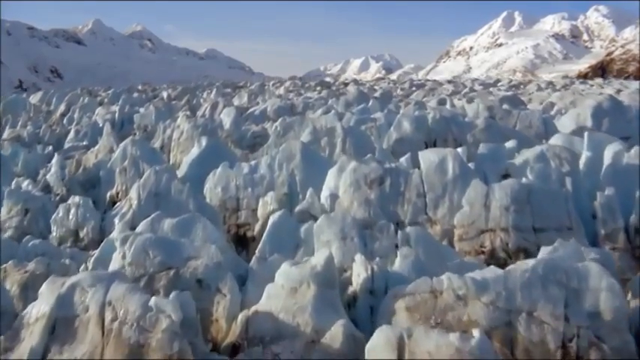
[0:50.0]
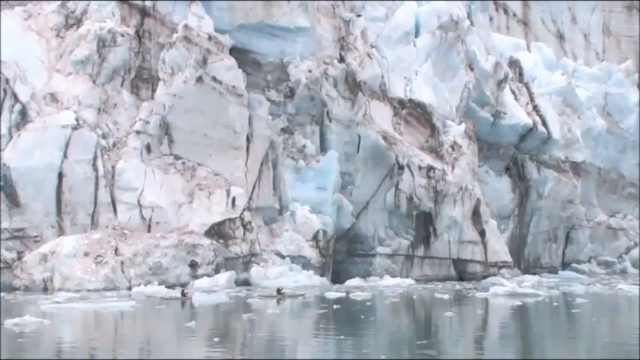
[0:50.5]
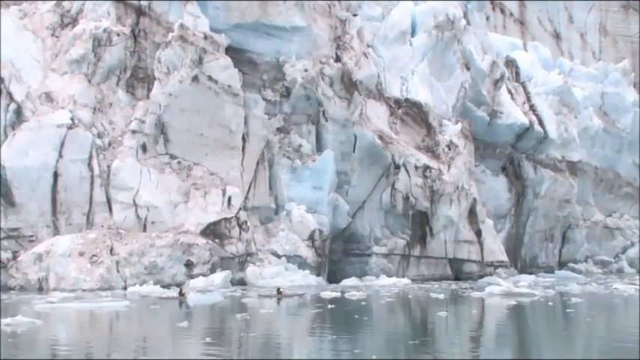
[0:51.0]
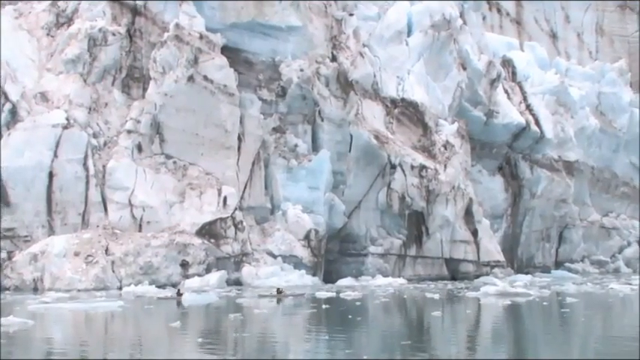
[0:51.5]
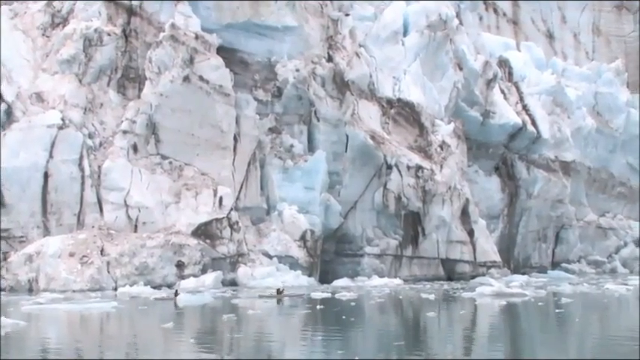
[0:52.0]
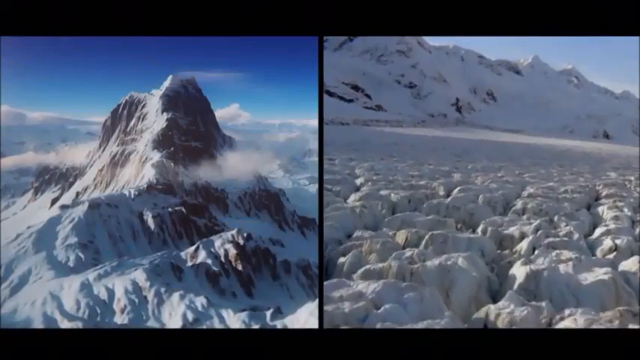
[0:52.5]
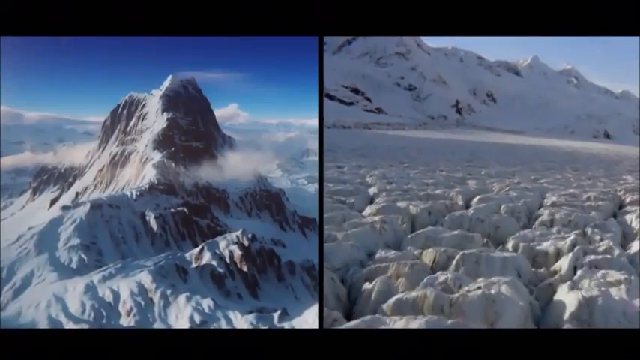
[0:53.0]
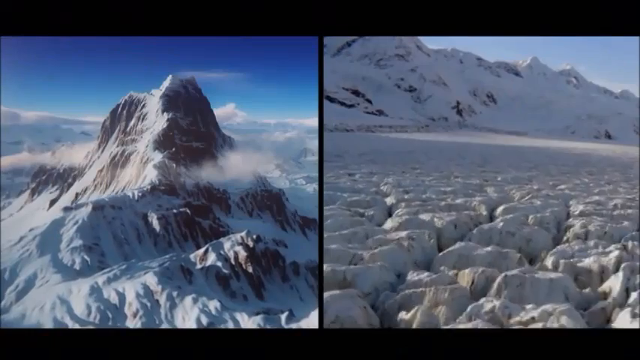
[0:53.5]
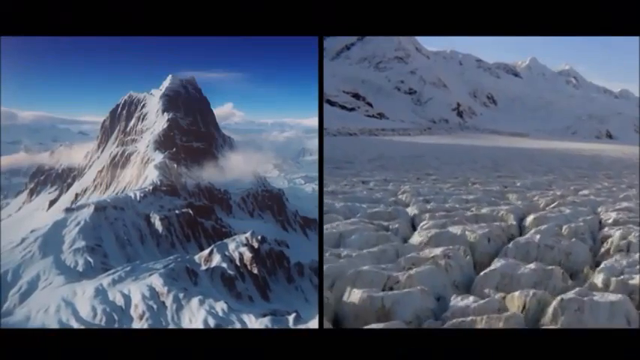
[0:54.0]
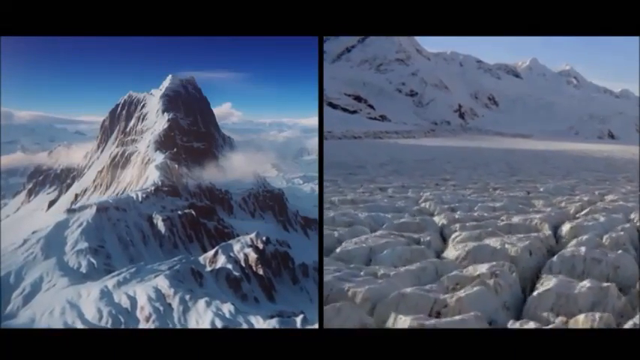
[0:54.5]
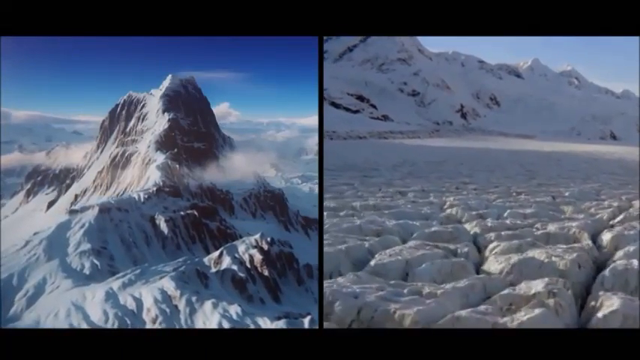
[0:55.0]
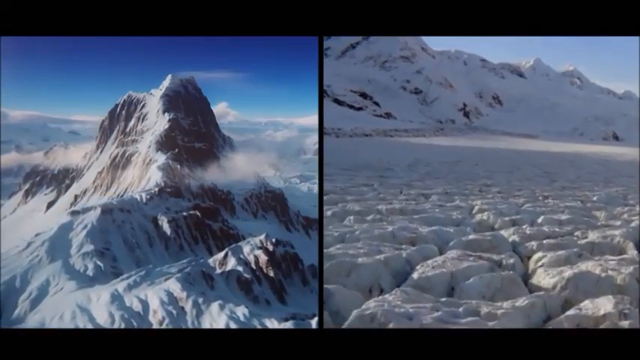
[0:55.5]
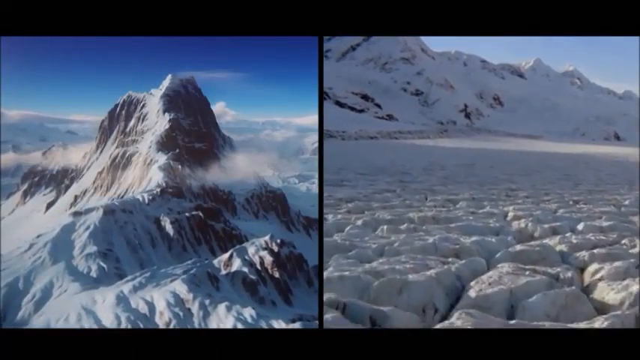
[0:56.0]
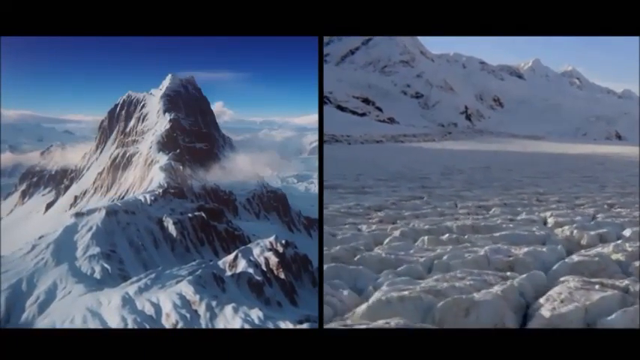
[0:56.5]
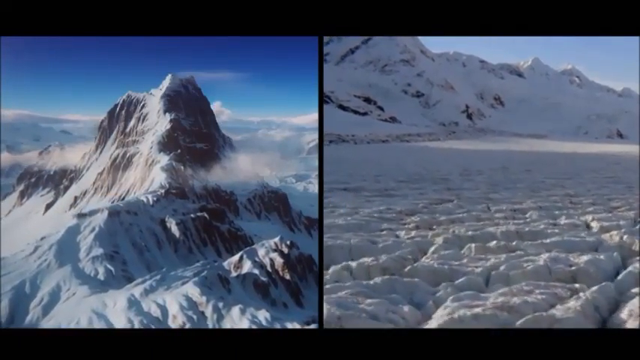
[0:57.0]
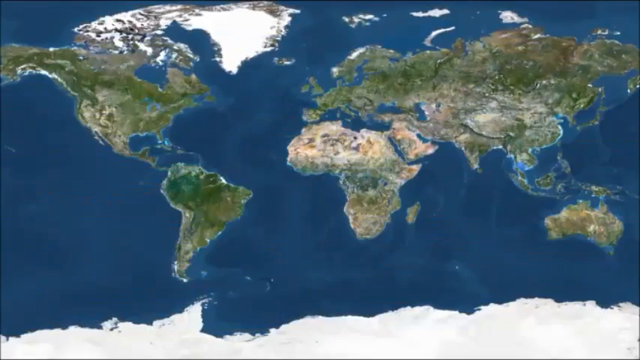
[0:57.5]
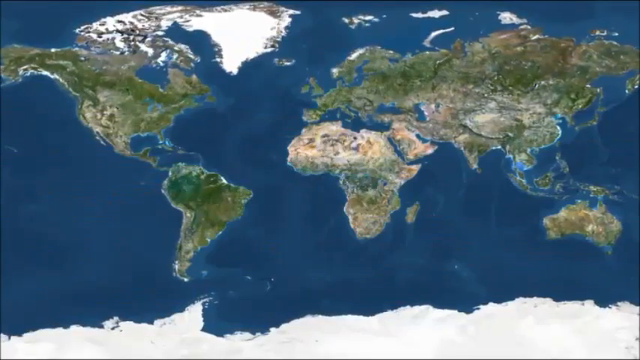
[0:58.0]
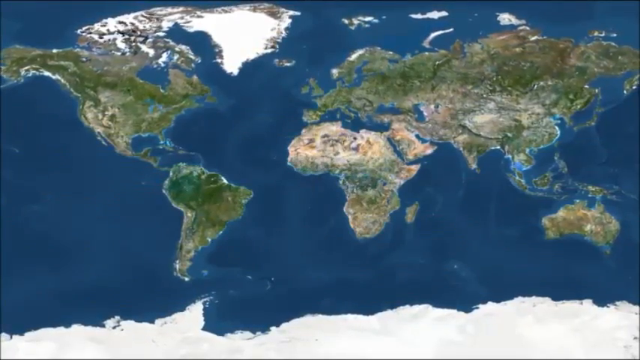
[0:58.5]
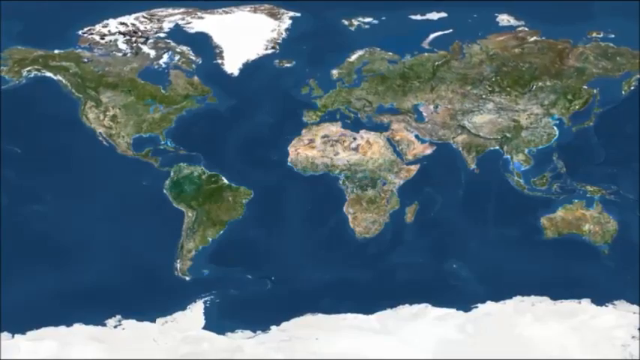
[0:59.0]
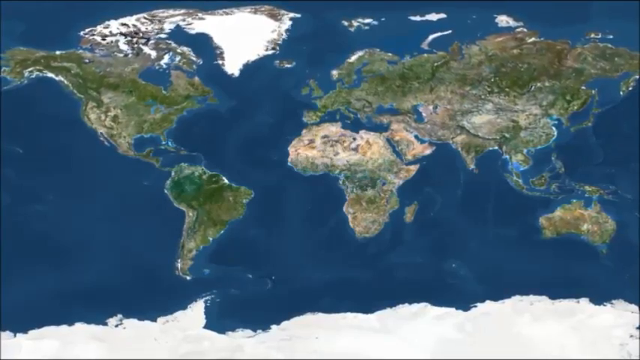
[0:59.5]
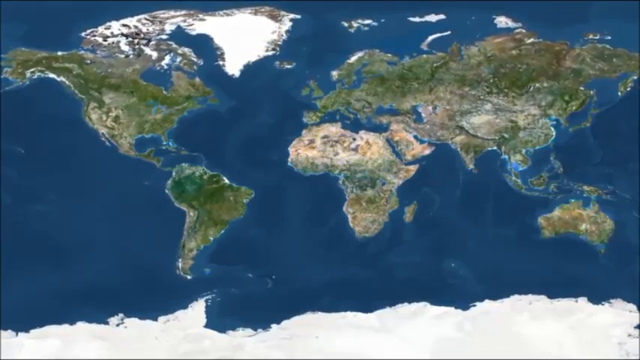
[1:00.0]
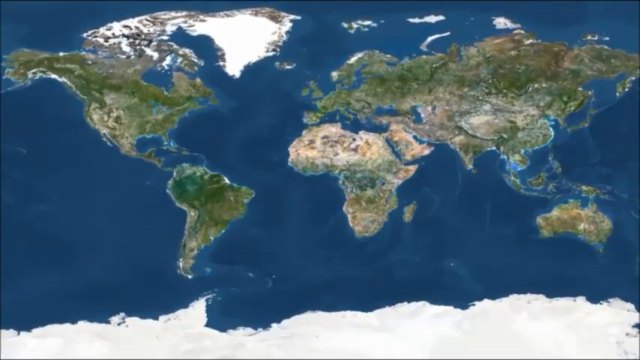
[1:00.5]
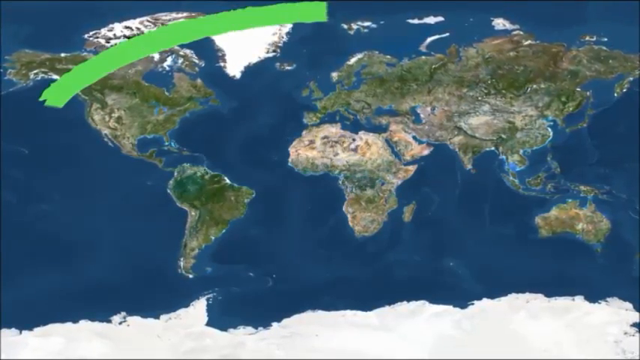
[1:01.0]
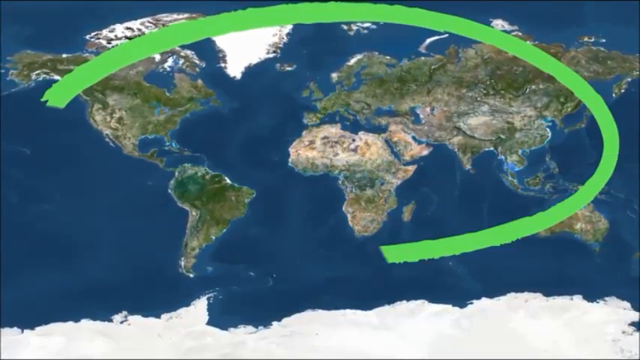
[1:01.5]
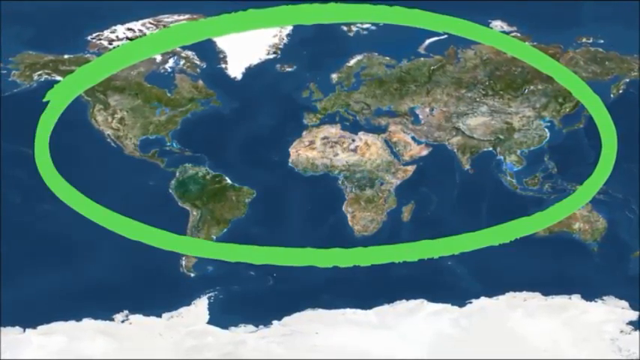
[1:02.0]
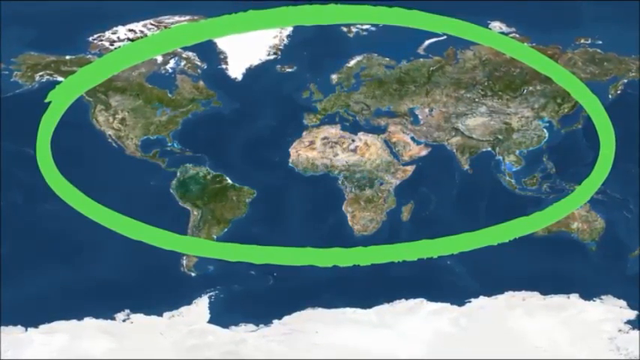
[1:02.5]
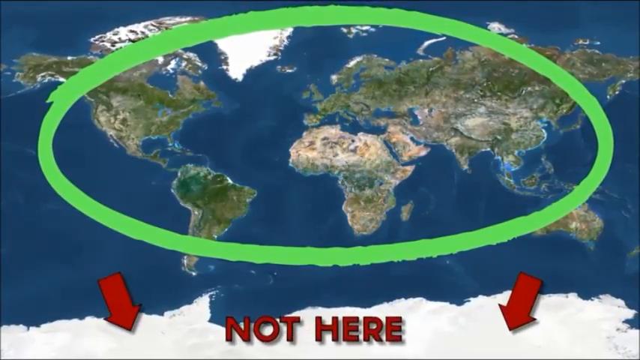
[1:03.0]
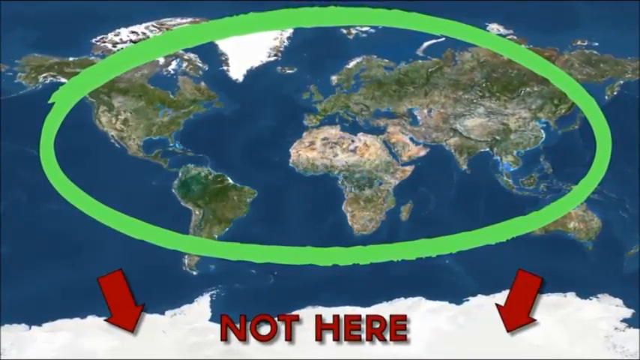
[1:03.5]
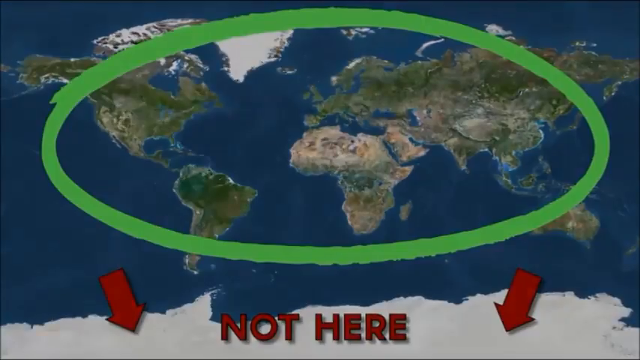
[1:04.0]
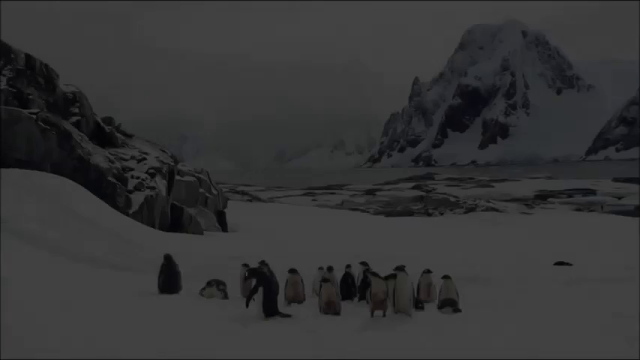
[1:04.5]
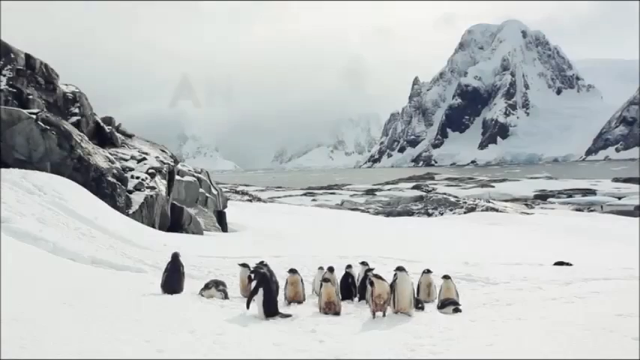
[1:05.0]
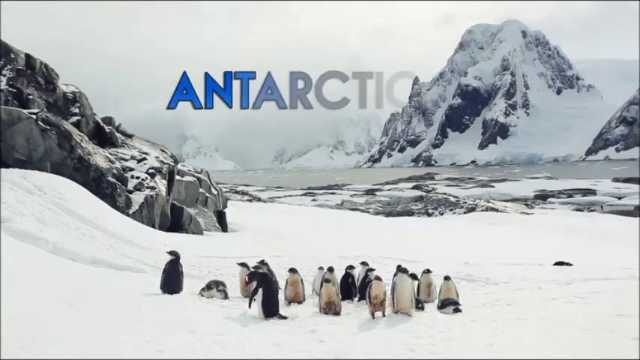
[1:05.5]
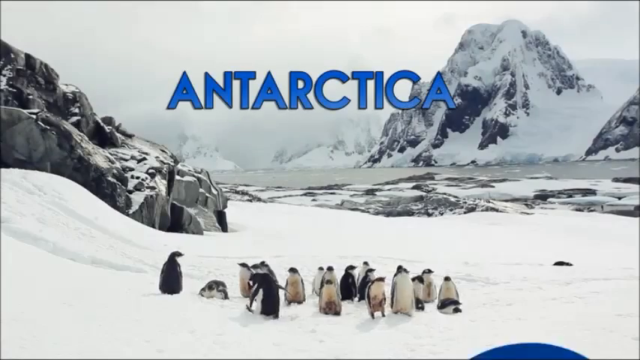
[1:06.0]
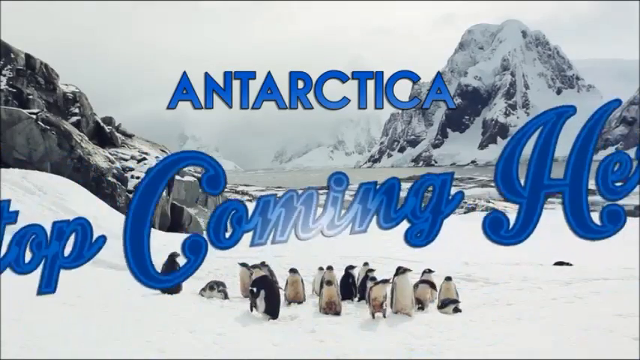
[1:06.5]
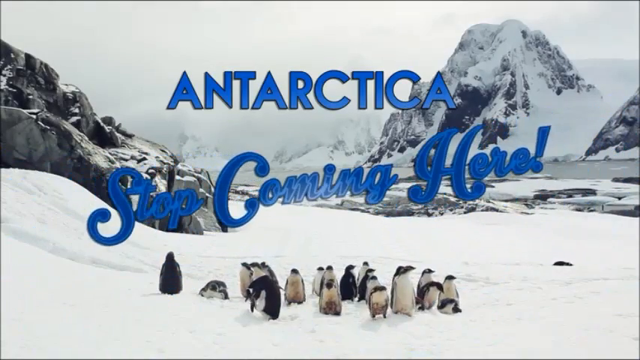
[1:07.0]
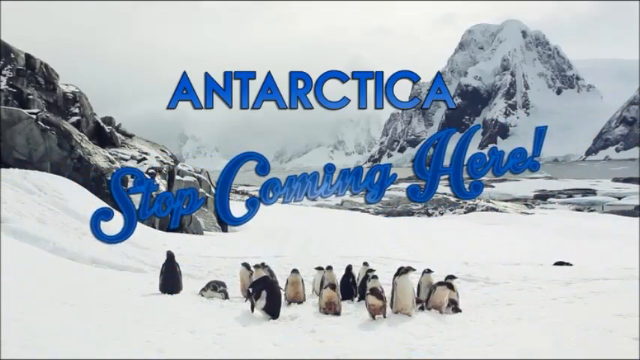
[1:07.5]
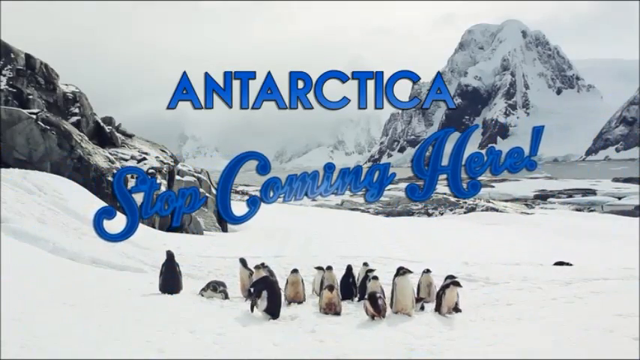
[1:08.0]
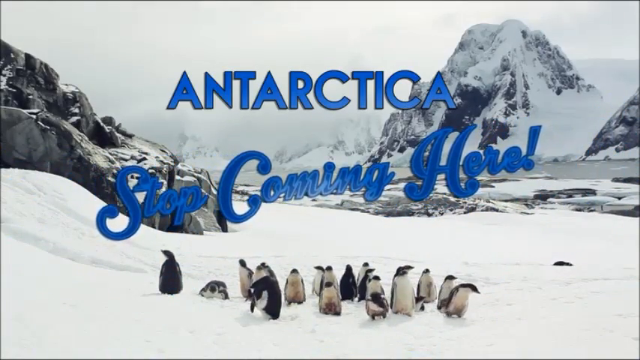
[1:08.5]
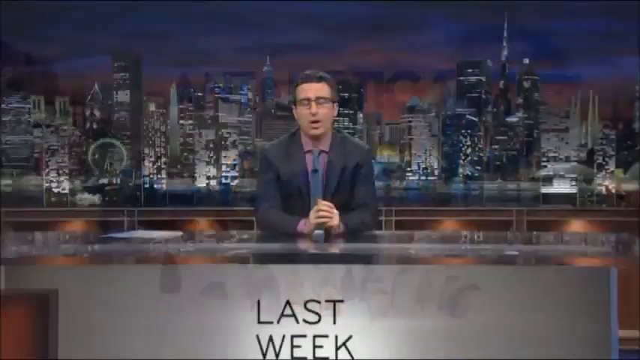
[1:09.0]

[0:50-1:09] The camera pans across the glacial area, showing areas of dirt and rock underneath the glaciers that are not normally seen, and views it at the level of the ocean. The picture changes to a split screen: on the left is a tall mountain surrounded by snow and clouds with a bright blue sky in the background; on the right is a mountain with snow in the background and what looks to be diminishing, melting, cracked glaciers in the foreground. The camera pans across ground that is cracked and dirty. A map of the continents appears as the view pulls out; the topographical map is colored in tan, shades of green and some white. A green circle is drawn around the continents above, which are green and tan, and the continent below, covered in white, has the words "not here" with red arrows on either side pointing to it. The video cuts to a group of about 15 penguins standing in the snow next to the ocean as the word "Antarctica" in blue comes across the screen, and then, in script writing reminiscent of a travel ad, the words "stop coming here" appear across the screen above the penguins.